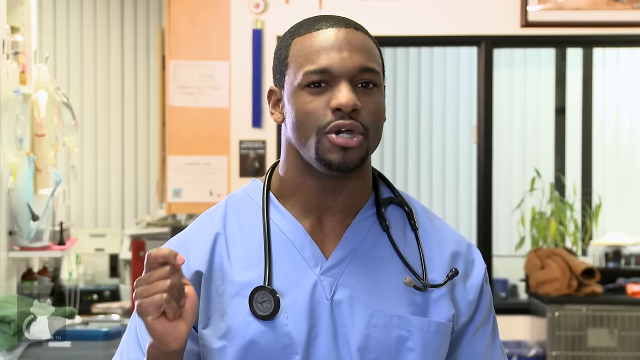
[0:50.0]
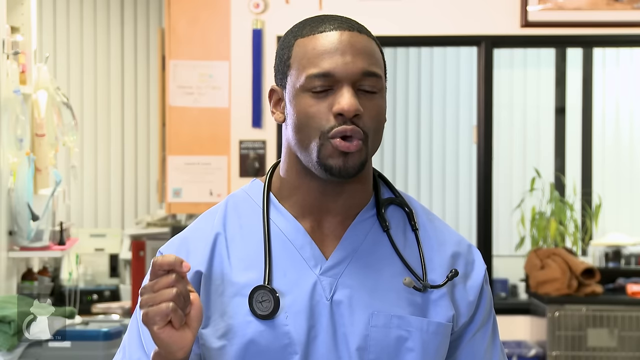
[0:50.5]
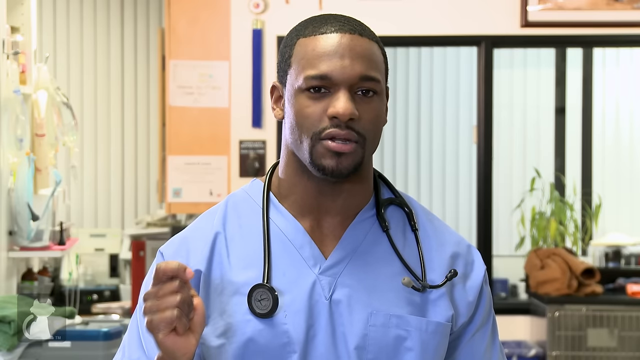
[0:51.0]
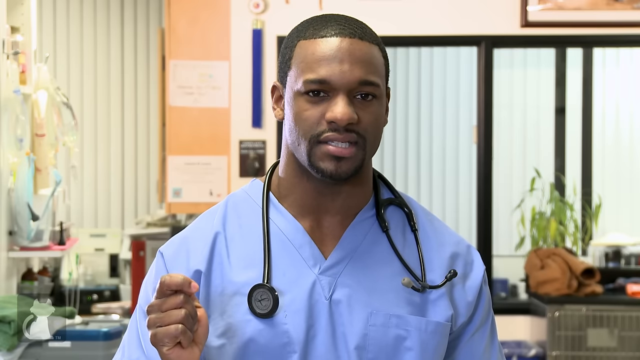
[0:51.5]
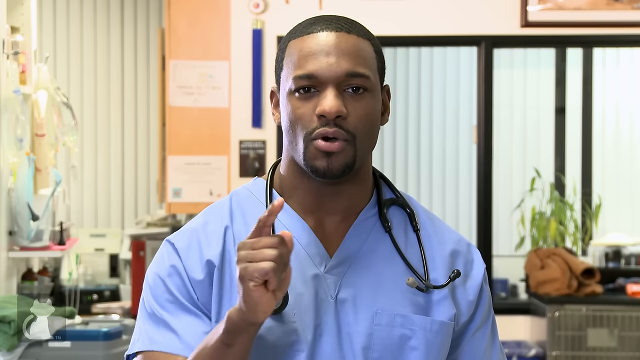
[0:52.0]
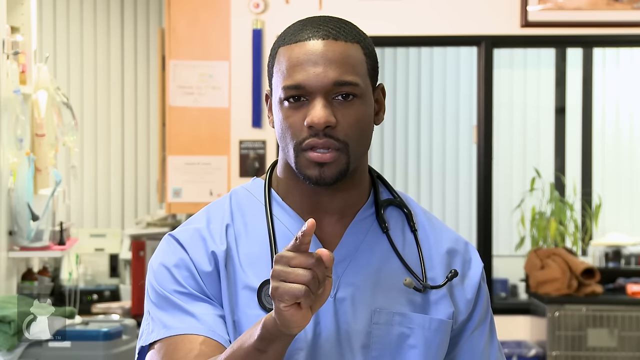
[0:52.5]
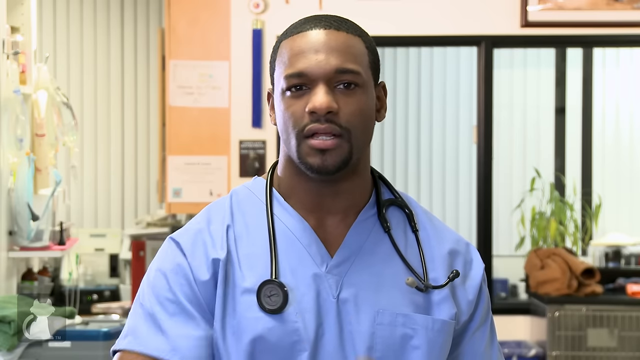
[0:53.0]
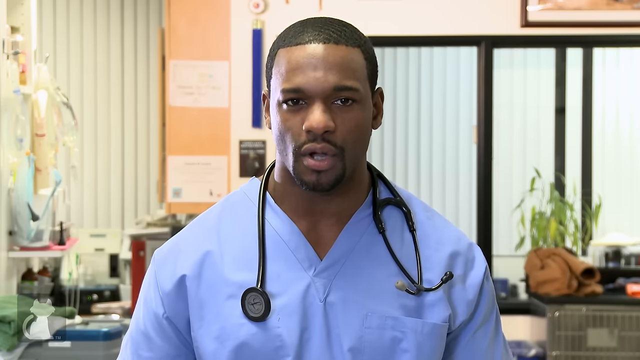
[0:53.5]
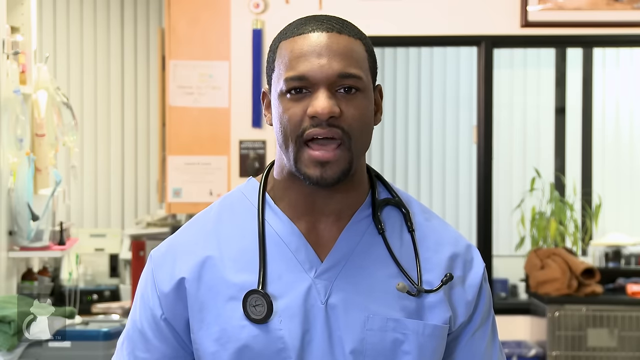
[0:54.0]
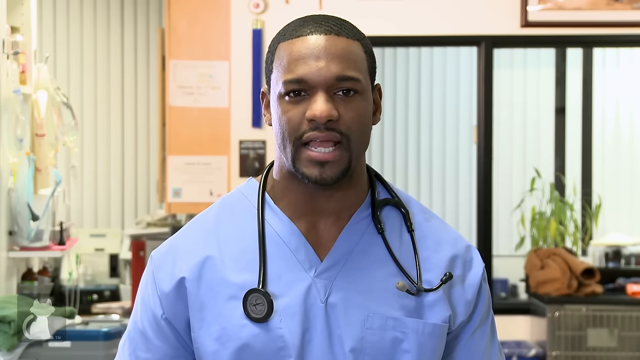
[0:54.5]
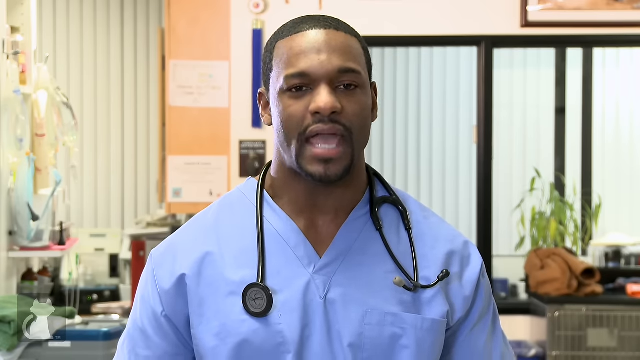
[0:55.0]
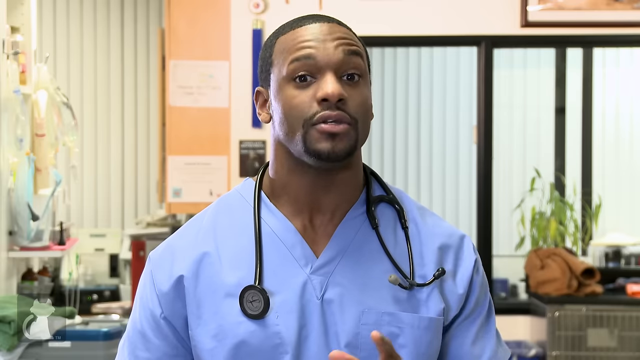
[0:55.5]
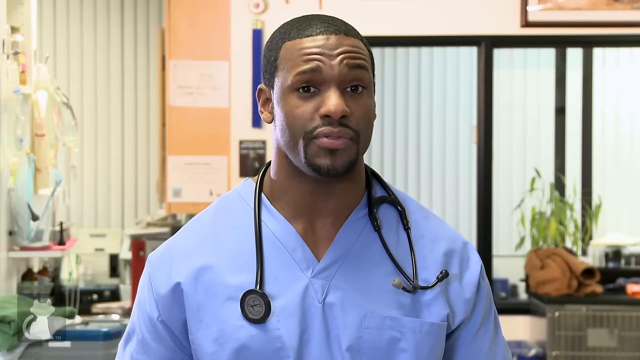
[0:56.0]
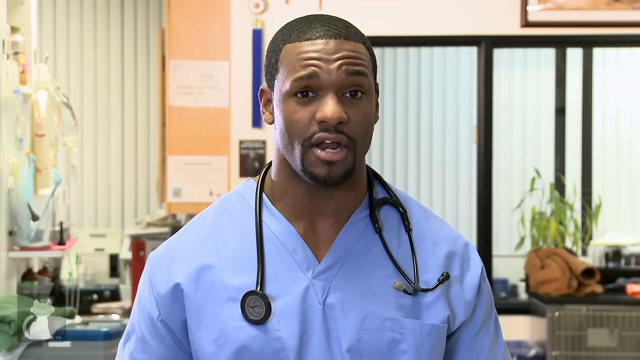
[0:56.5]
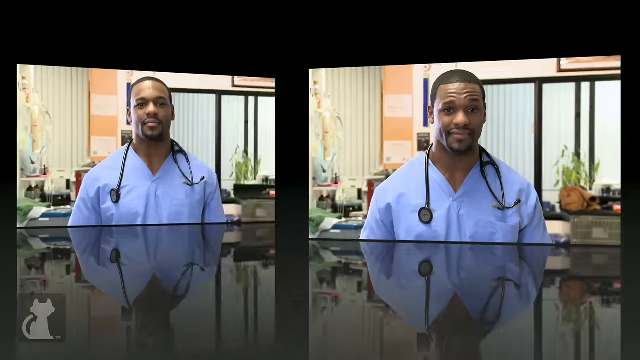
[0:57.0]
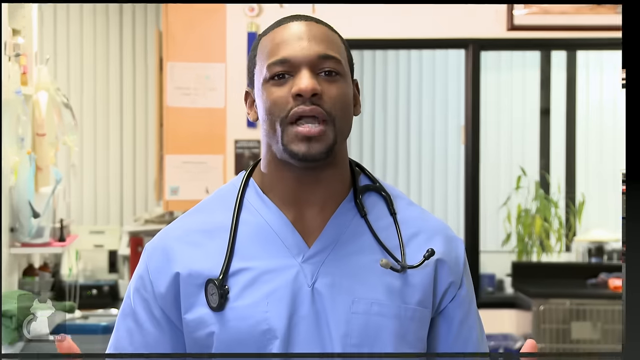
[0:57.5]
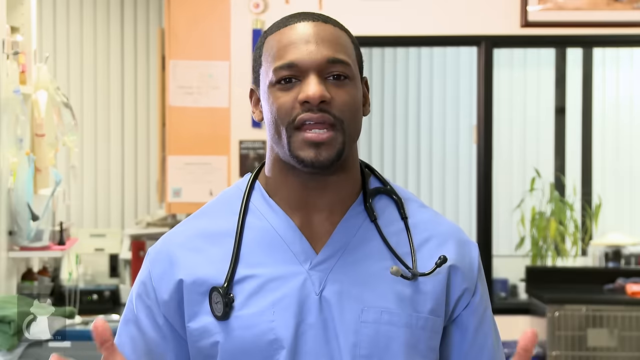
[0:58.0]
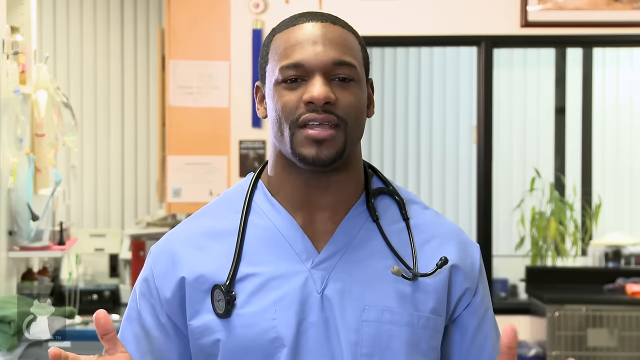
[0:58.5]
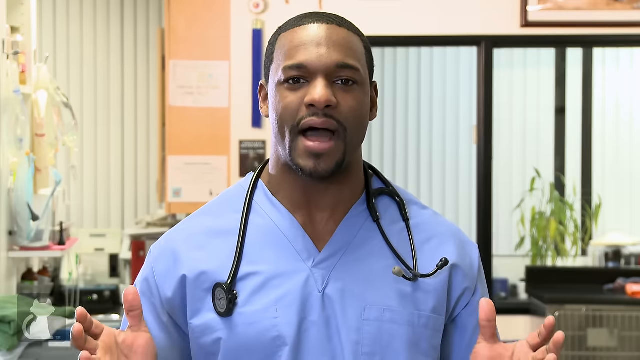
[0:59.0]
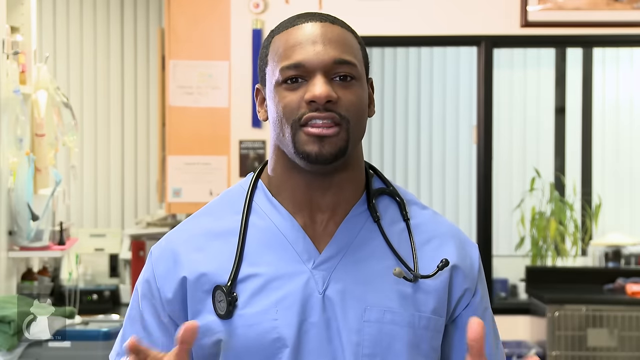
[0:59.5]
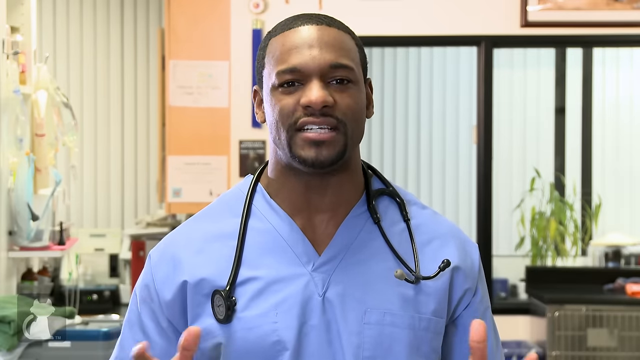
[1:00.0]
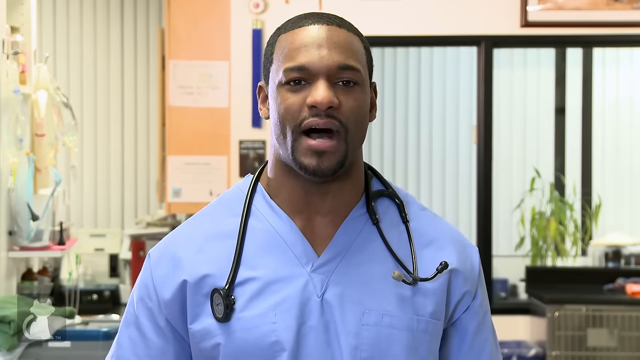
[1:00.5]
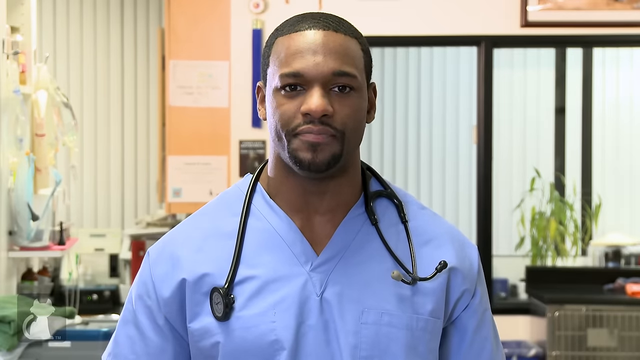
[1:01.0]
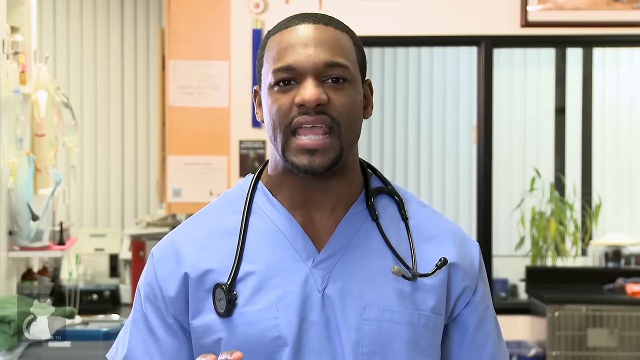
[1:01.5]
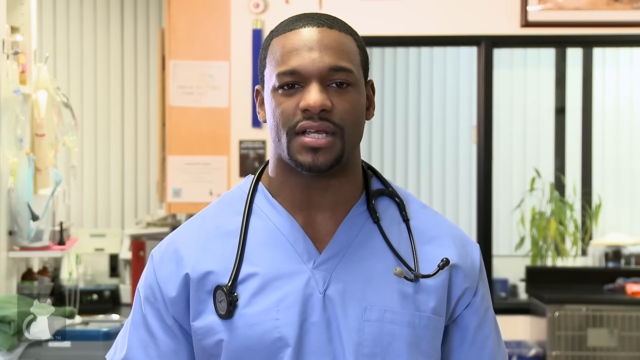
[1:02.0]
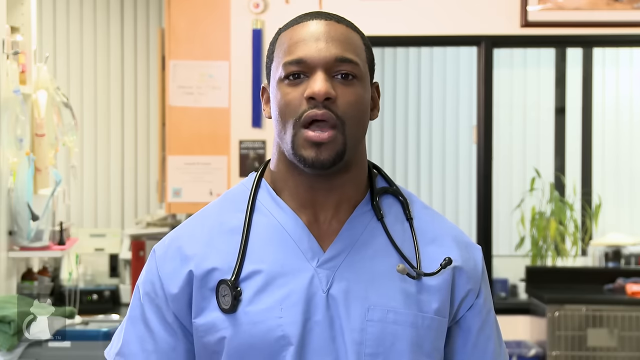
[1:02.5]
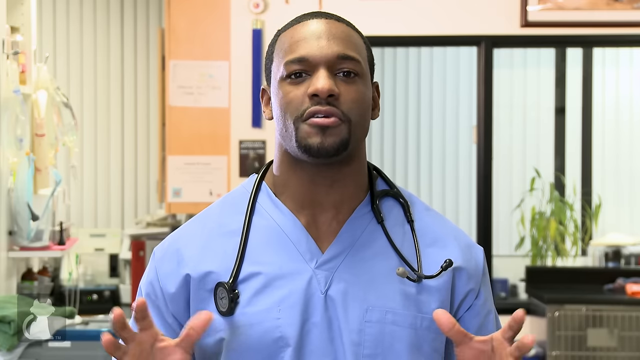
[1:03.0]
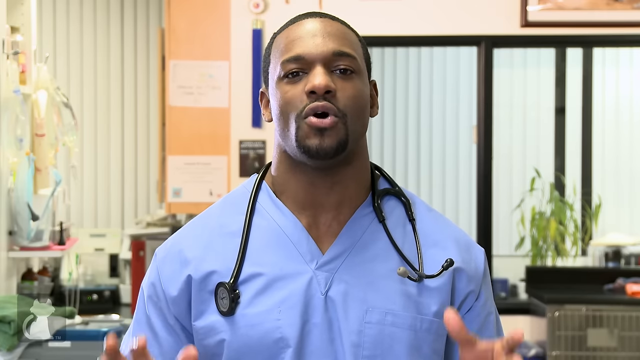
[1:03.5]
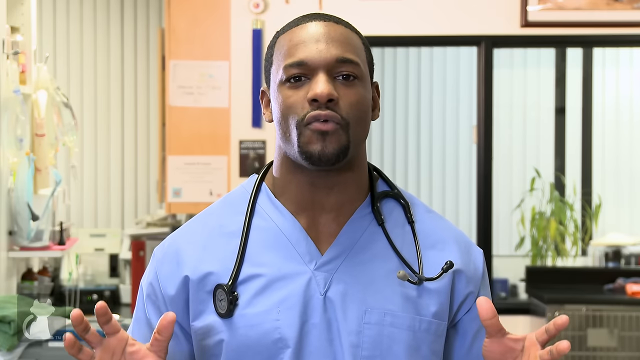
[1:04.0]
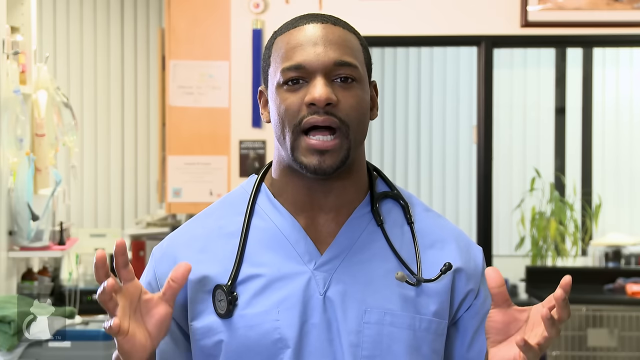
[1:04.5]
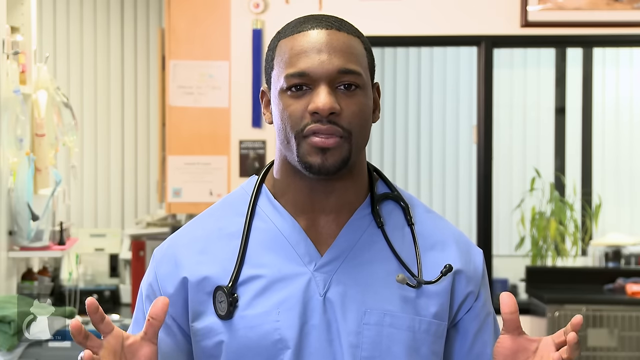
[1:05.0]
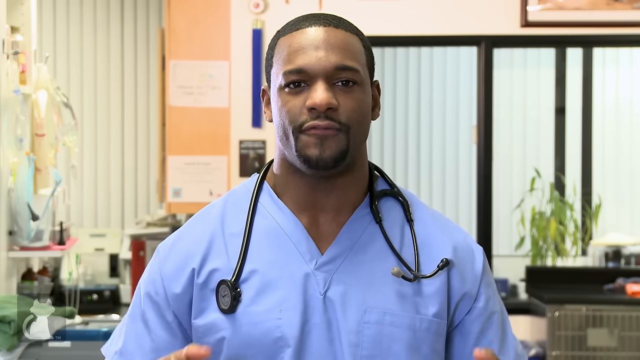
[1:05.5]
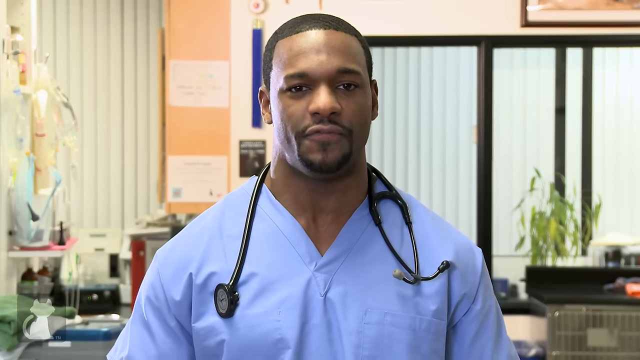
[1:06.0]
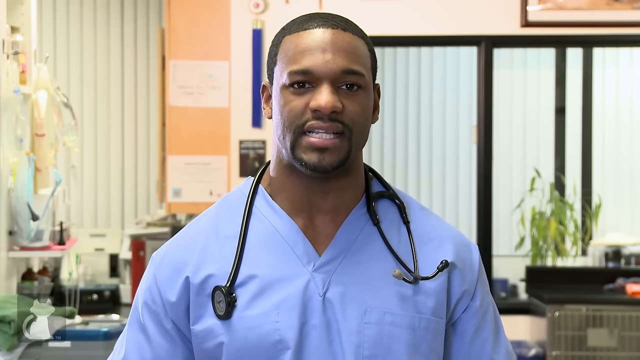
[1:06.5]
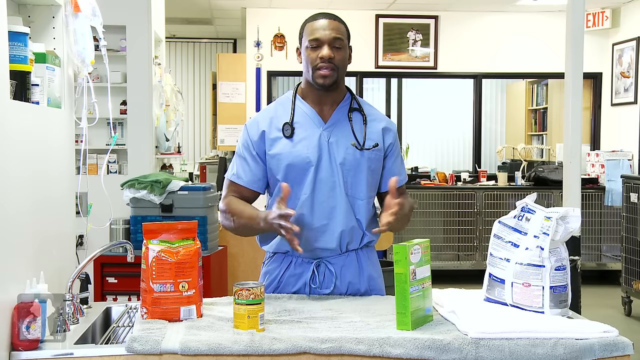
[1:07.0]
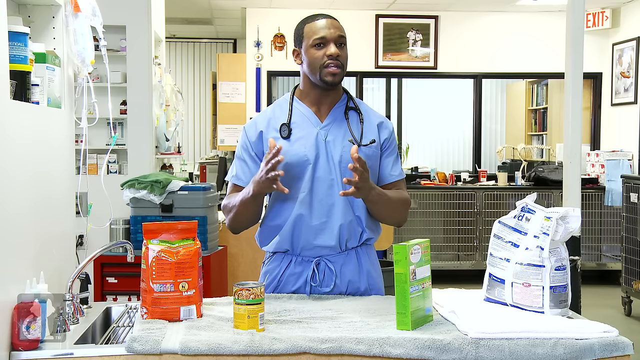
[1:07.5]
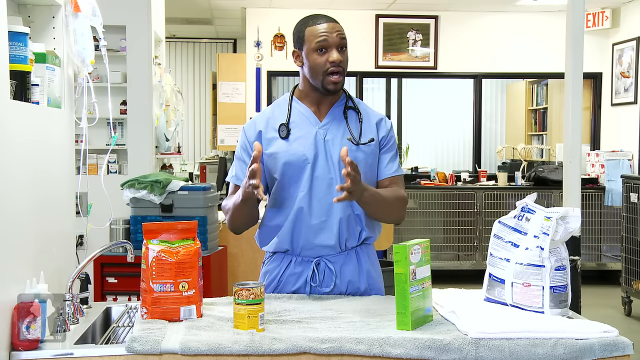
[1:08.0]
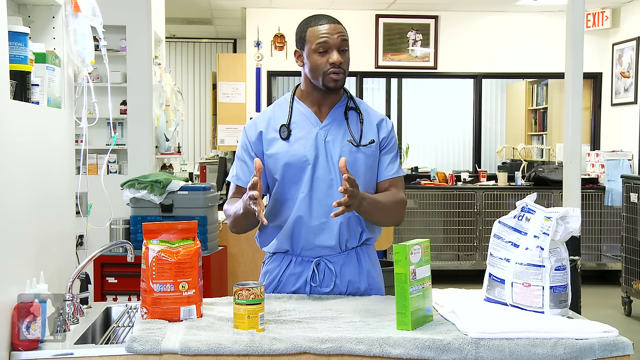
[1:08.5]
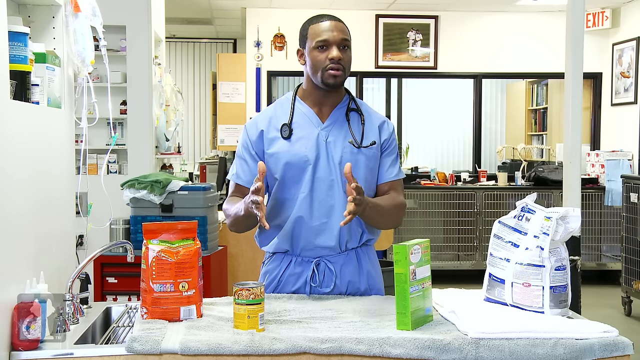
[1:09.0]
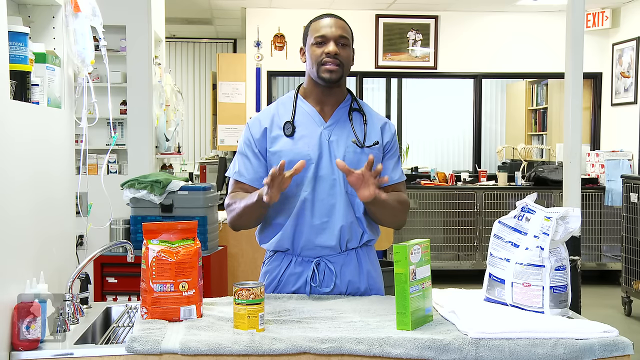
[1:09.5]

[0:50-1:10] A male medical worker in blue scrubs has a black stethoscope draped across the back of his neck. He is a Black man, quite handsome, with a very trim, stylish mustache and beard and short bobbed hair. He stands in his medical office, with a glass sliding door and white drapes behind him and a pastel orange wall. As he speaks, he holds his right hand in a slight fist and shakes it gently to emphasize his point, then points with his right index finger. He drops his hand and continues speaking, slightly nodding his head, his eyebrows furrowing with the seriousness of what he is saying. The screen transitions to show him again in the same office, talking. He now looks a bit more relaxed, using both hands to gesture as though explaining something, palms open and hands slightly raised in front of him. Next, he is seen from the head down to the hips, also wearing blue scrub pants. He stands behind a table holding several packages: from the left, a red package, a small blue can, a green package, and a large white and blue package. An exit sign is in the upper right corner of the wall, and two framed images are on the wall. To his left are plastic canisters and what looks like IV fluids hanging from the wall on the left side.